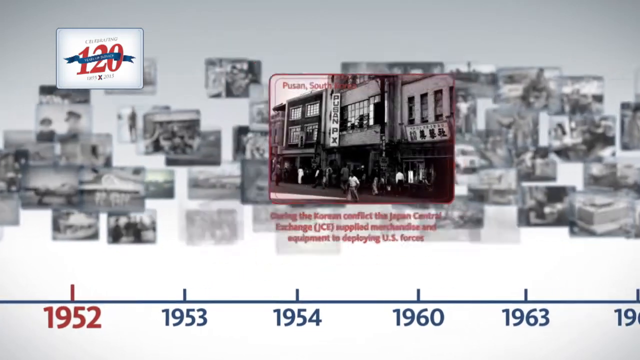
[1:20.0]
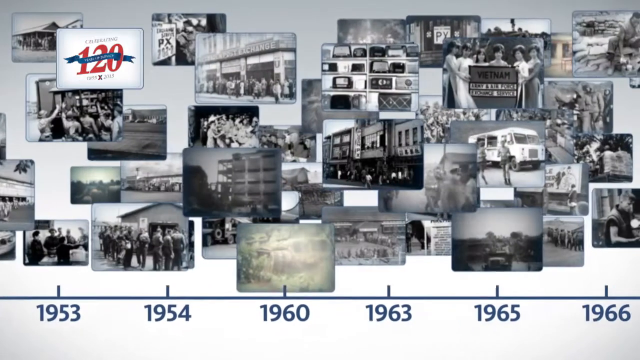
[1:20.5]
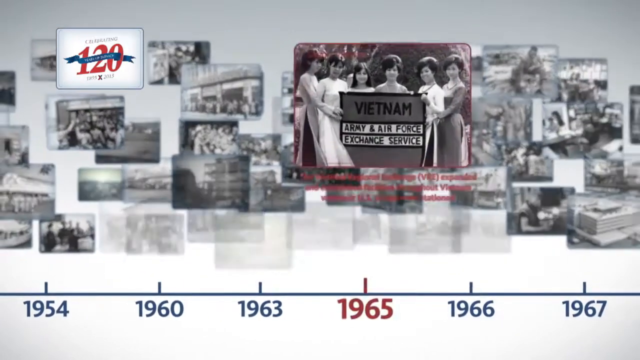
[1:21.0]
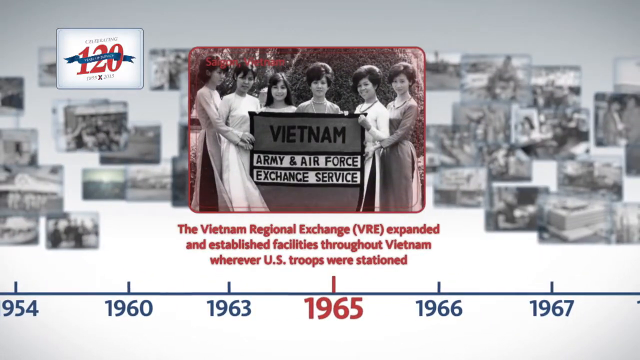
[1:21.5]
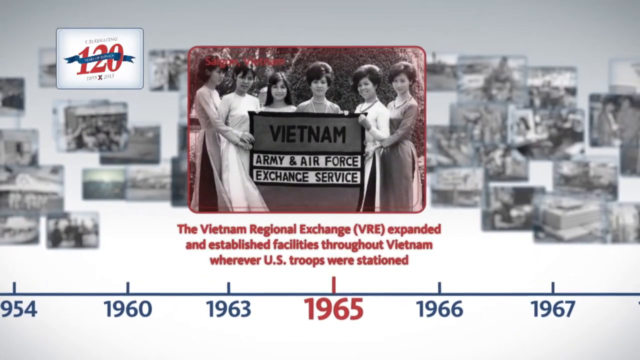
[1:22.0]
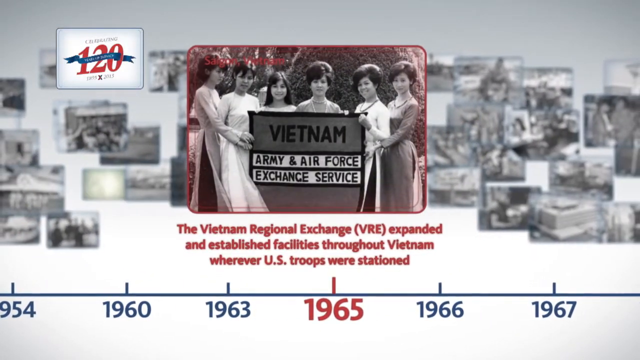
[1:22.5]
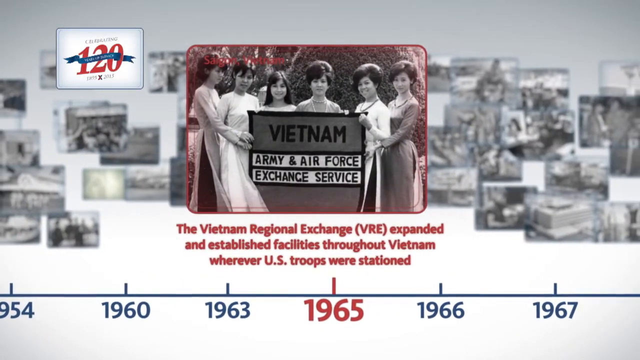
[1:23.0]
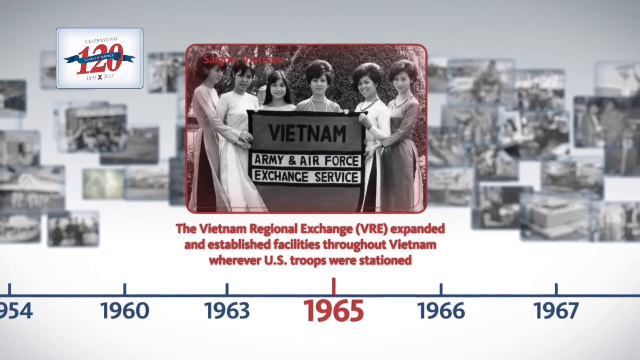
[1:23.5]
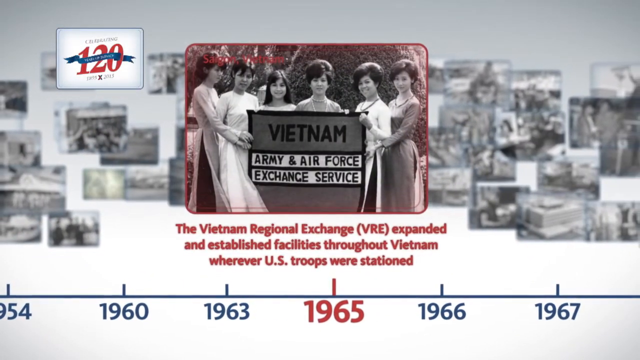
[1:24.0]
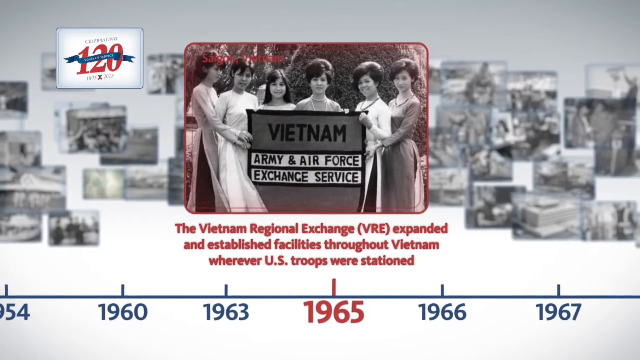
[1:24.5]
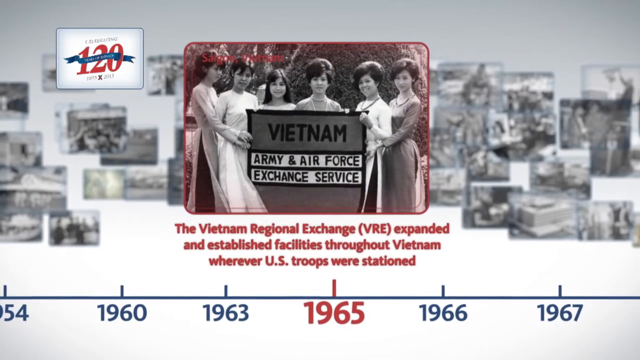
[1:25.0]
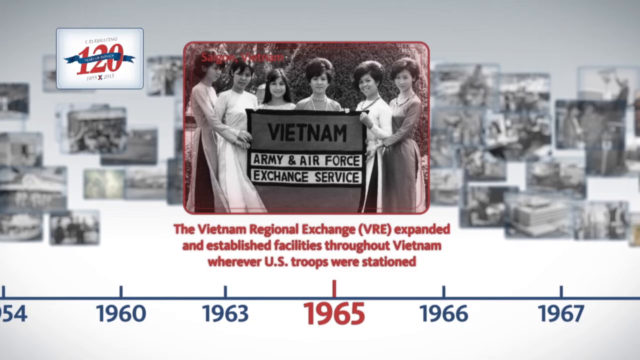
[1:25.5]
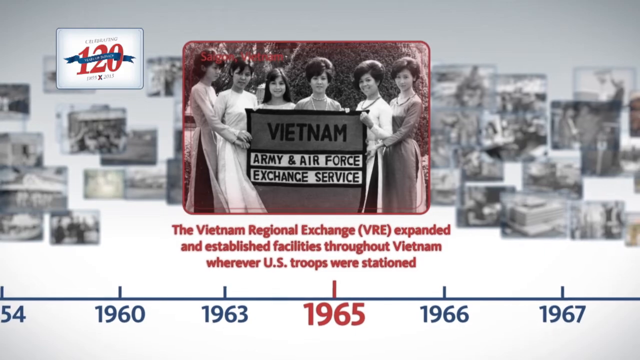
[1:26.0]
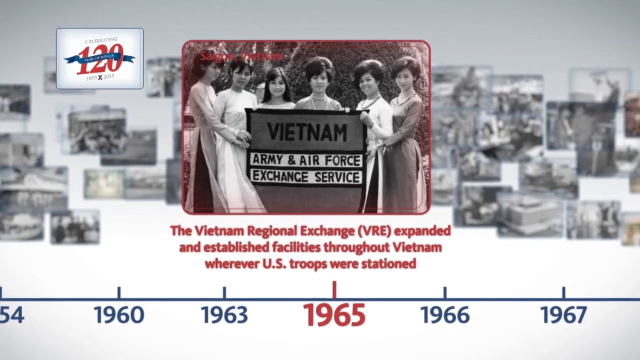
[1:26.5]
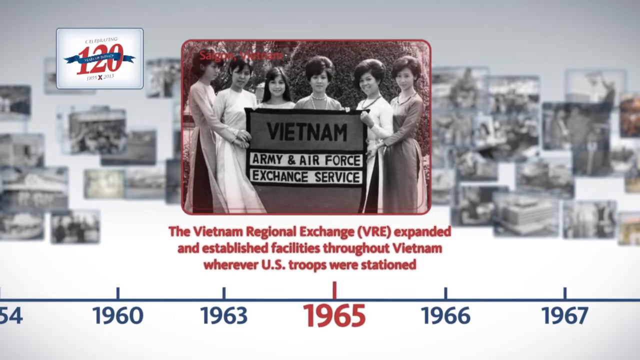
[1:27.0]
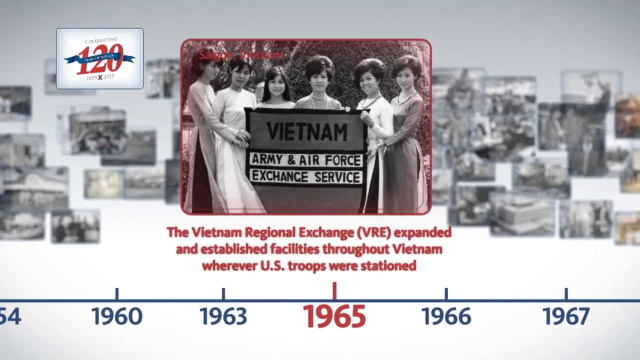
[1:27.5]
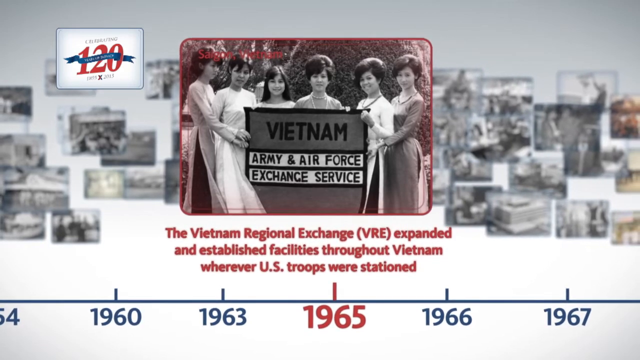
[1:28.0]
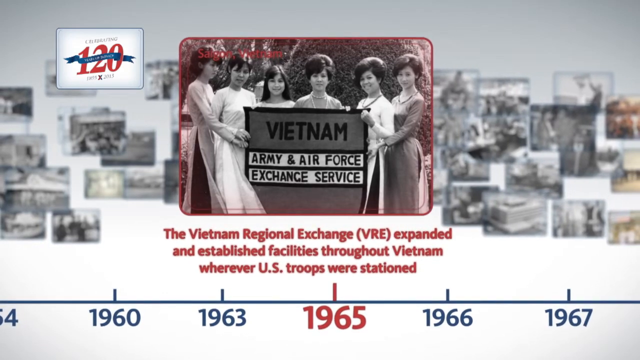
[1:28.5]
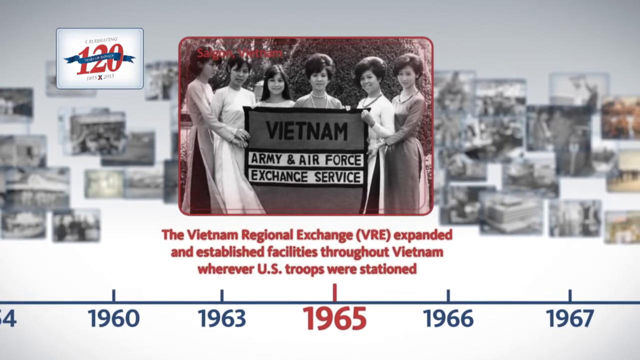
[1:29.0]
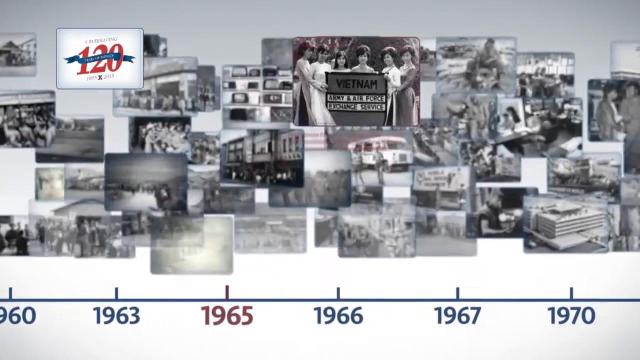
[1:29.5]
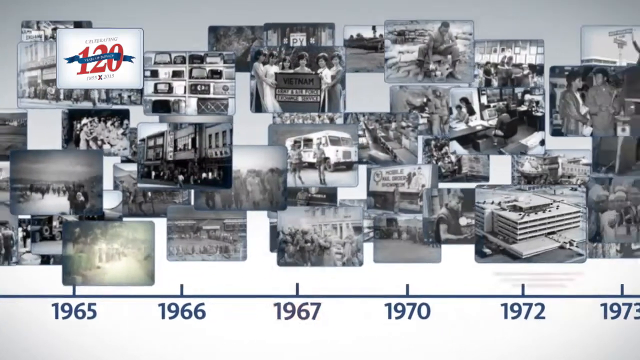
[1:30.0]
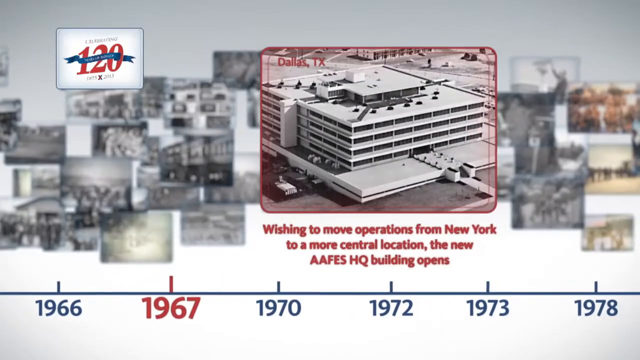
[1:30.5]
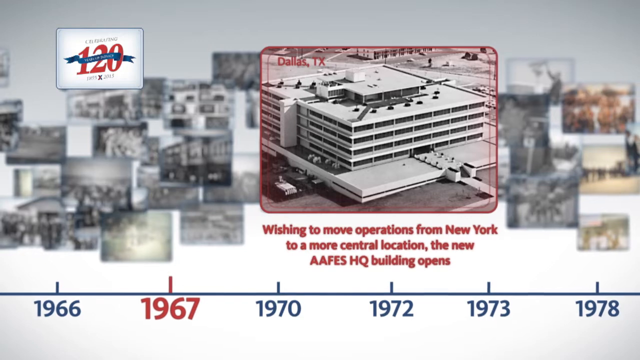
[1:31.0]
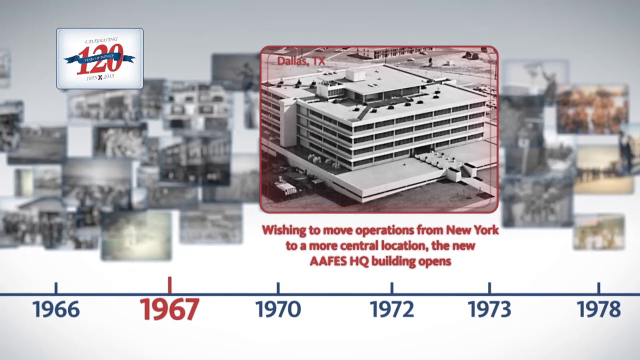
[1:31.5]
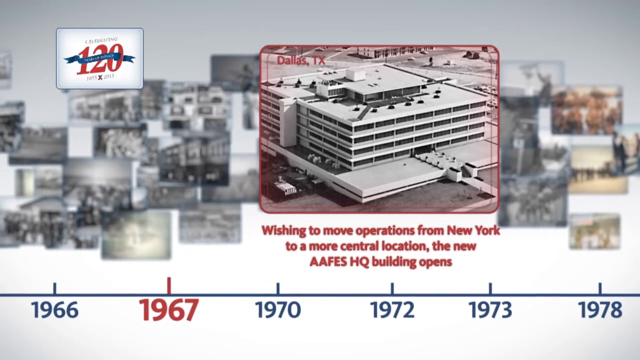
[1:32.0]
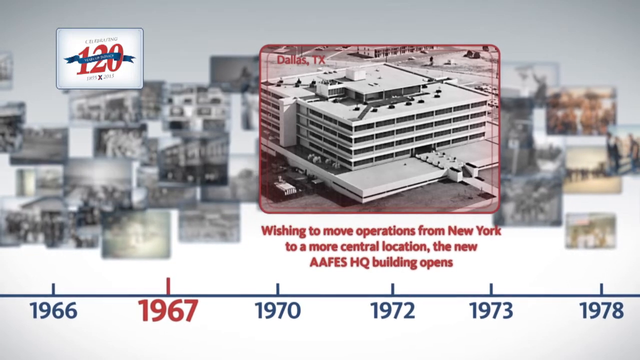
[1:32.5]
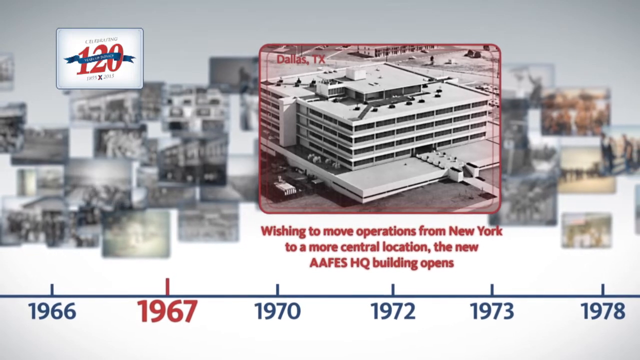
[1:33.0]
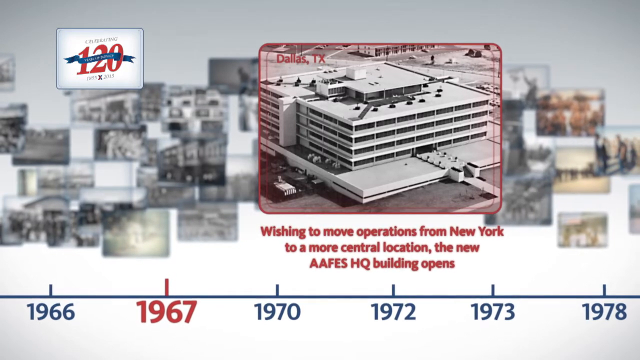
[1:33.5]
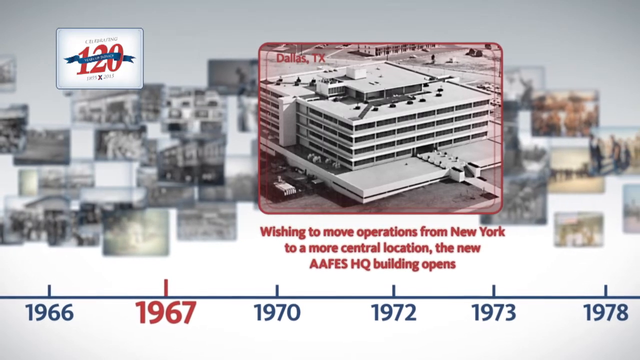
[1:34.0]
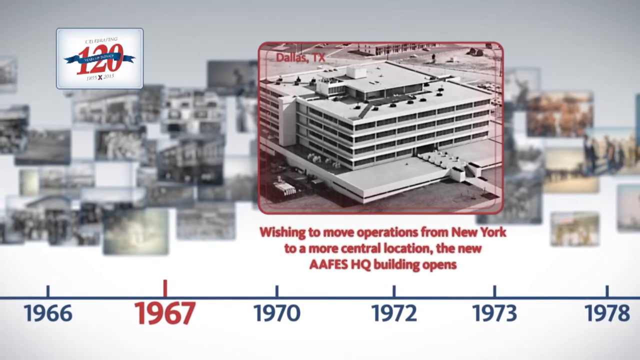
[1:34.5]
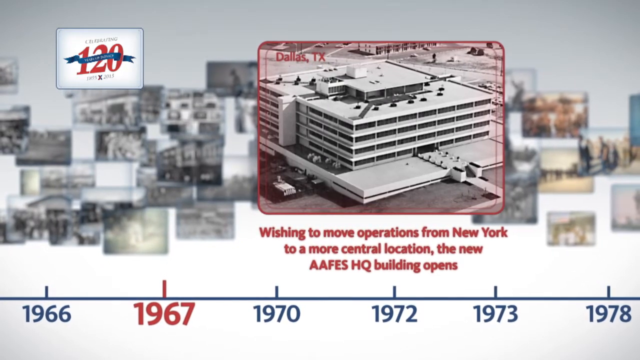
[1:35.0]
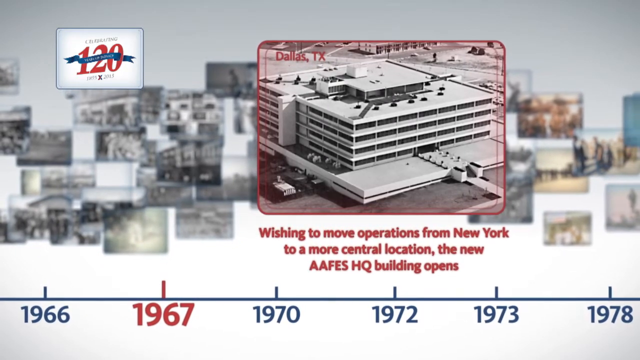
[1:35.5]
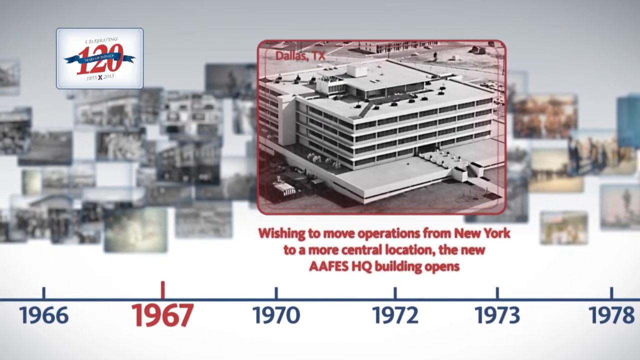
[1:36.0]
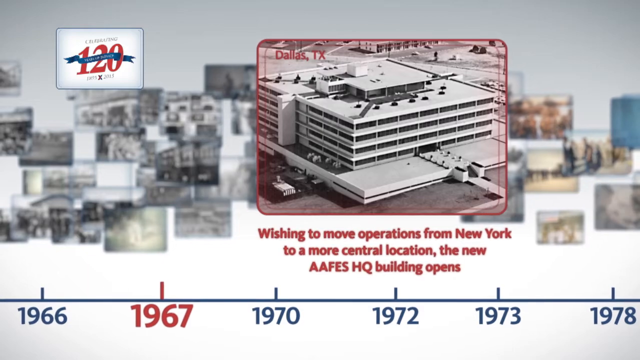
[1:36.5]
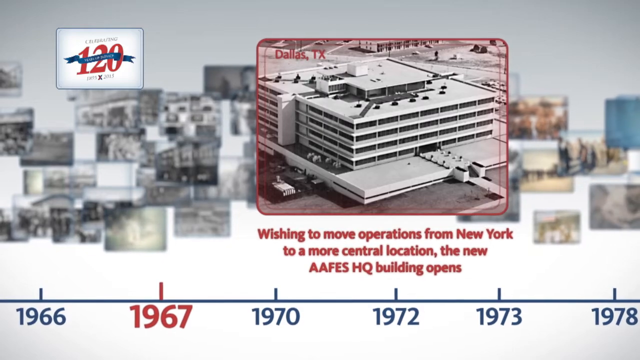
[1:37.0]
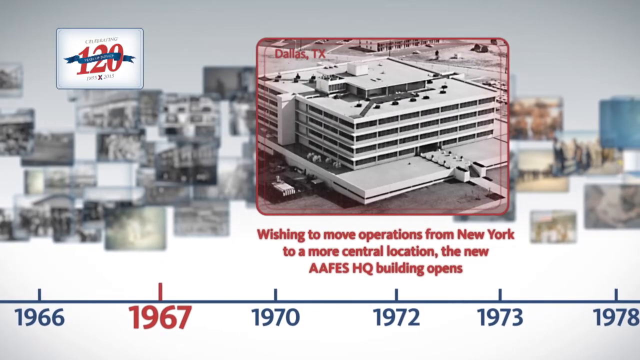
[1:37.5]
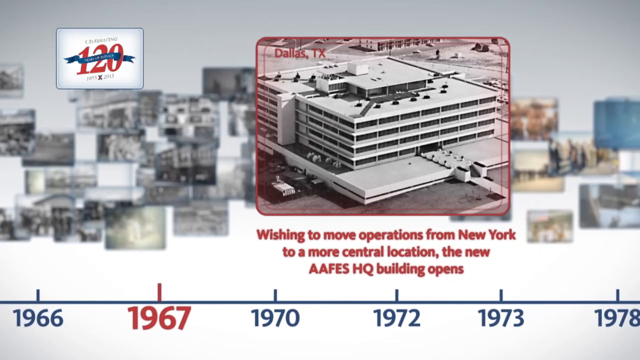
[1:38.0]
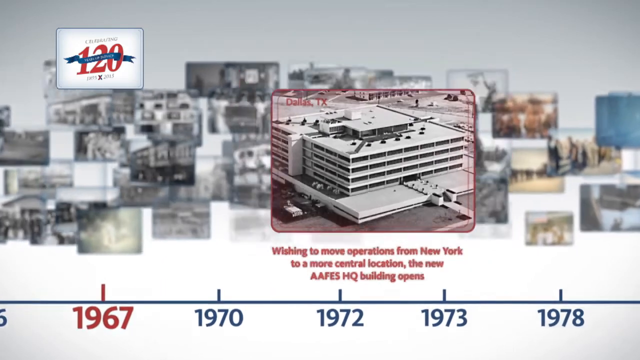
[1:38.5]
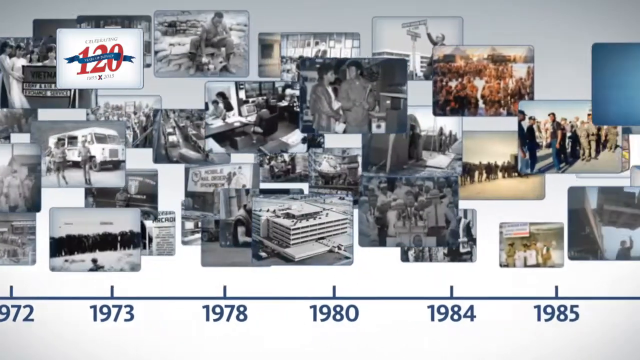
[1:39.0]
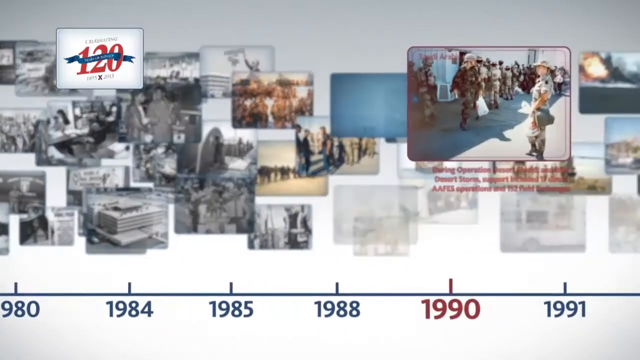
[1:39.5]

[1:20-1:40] For the Vietnam War, text below the highlighted photograph states that the Vietnam Regional Exchange, or VRE, expanded and established facilities throughout Vietnam where U.S. troops were stationed. The black and white photograph shows six Vietnamese women holding the Vietnam Army and Air Force Exchange Service sign, with text in the upper left corner reading "Saigon, Vietnam." Red borders surround the photograph, with a light pink-red color leading into it. For 1967, another black and white photograph bordered in red is highlighted, with "Dallas, Texas" written in its upper left corner; wishing to move operations from New York to a more central location, the new AFES headquarters building opens in Dallas, Texas.